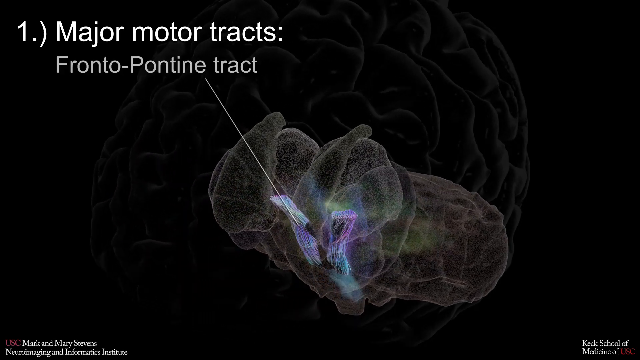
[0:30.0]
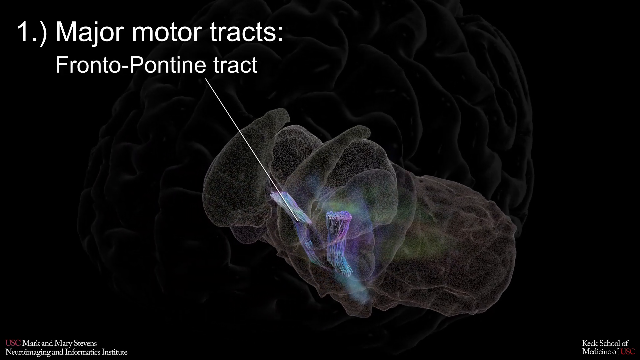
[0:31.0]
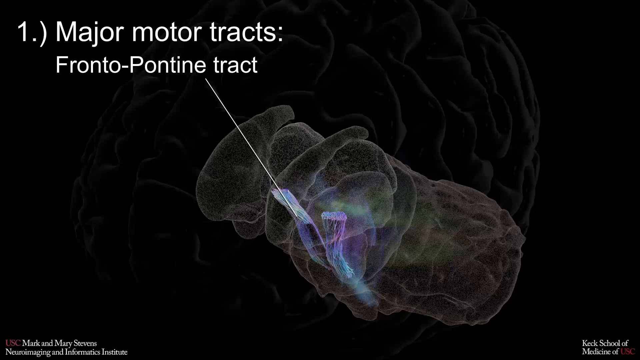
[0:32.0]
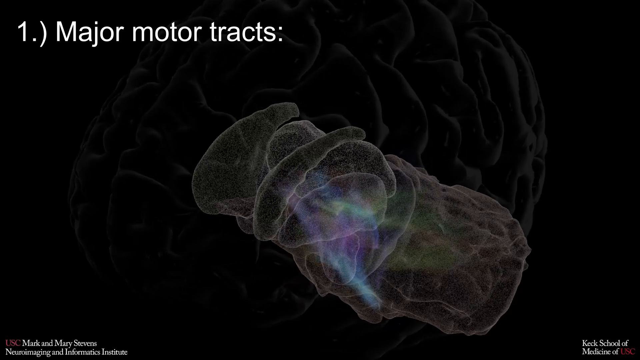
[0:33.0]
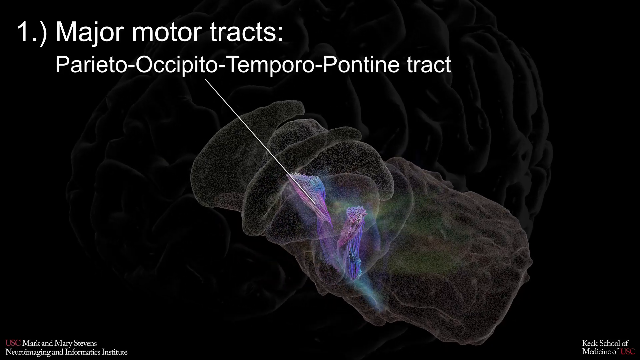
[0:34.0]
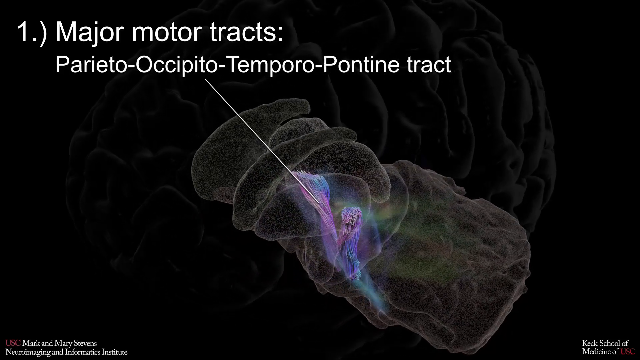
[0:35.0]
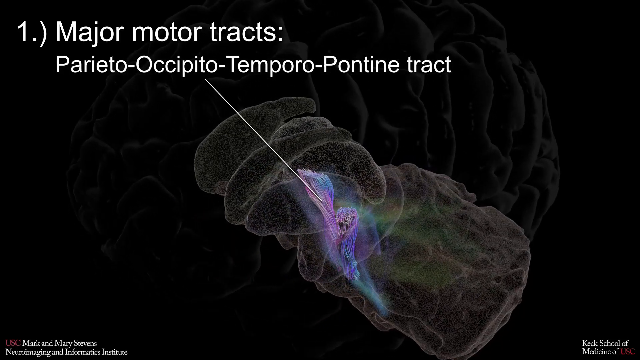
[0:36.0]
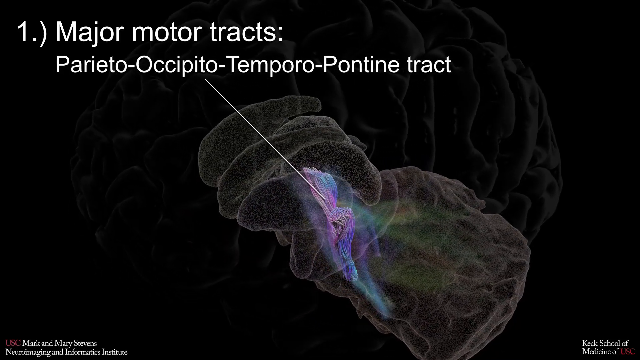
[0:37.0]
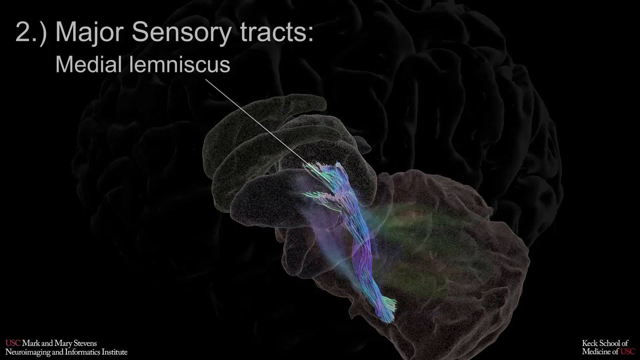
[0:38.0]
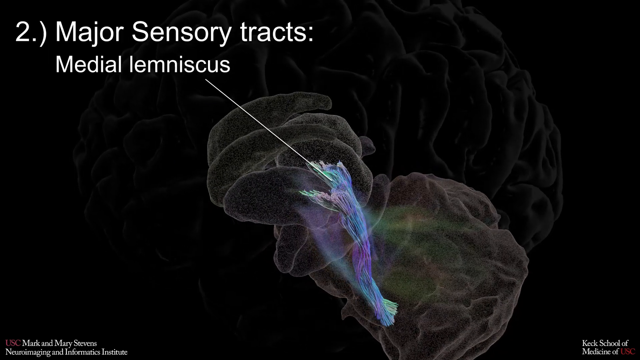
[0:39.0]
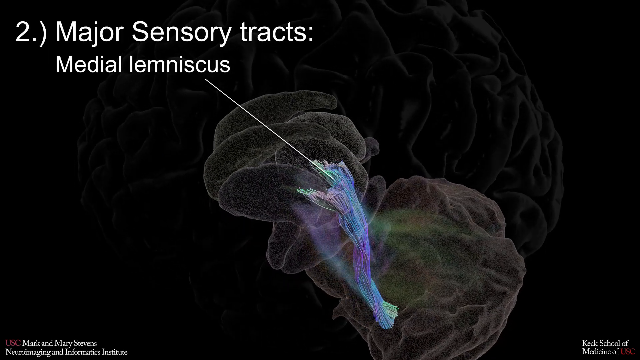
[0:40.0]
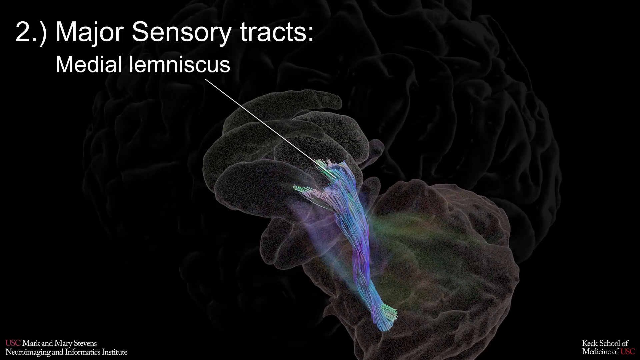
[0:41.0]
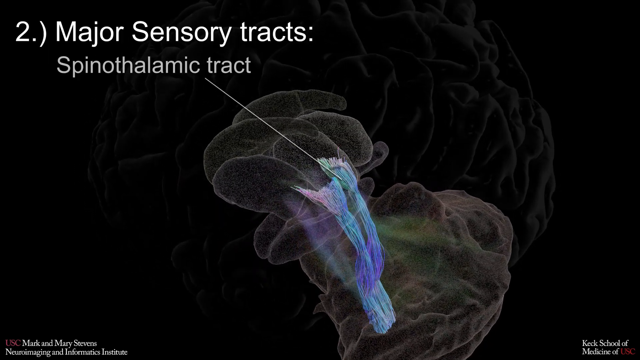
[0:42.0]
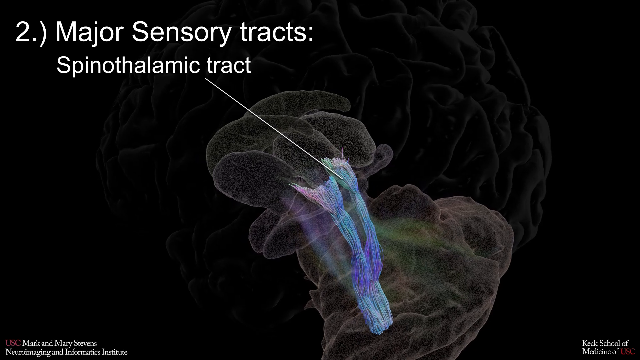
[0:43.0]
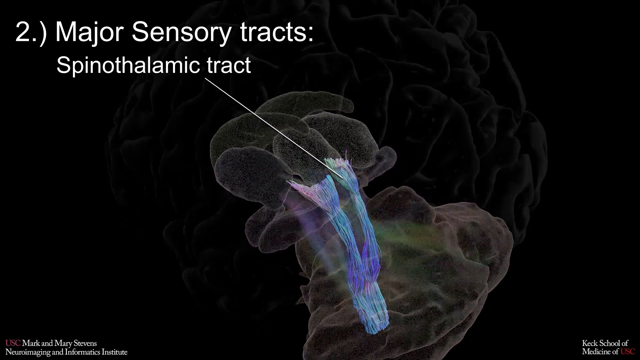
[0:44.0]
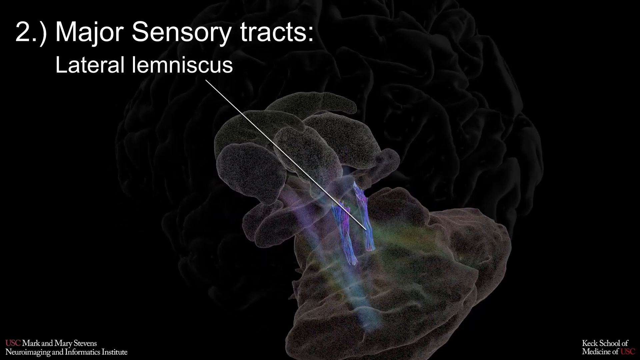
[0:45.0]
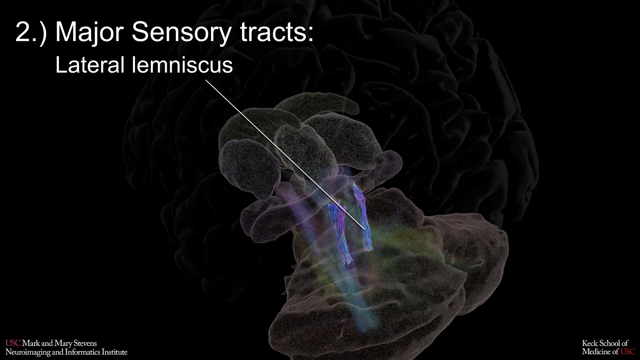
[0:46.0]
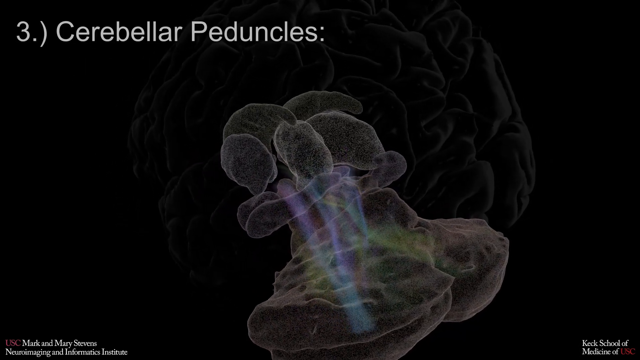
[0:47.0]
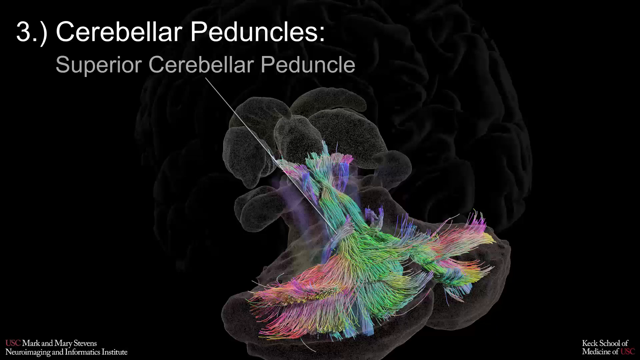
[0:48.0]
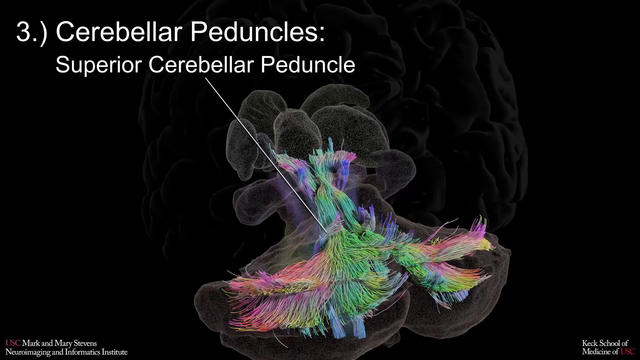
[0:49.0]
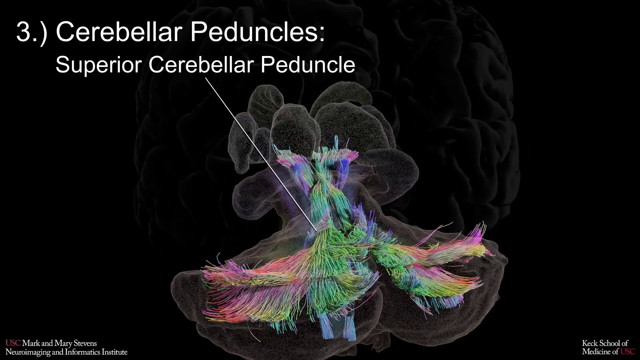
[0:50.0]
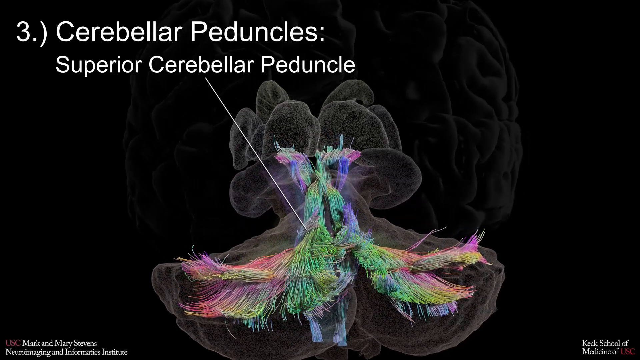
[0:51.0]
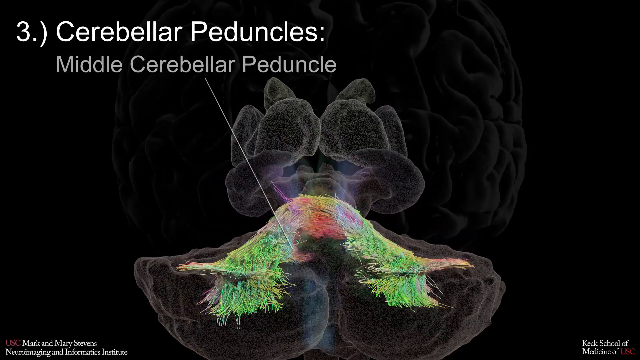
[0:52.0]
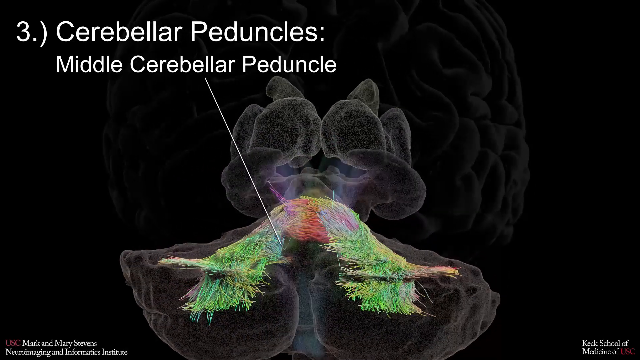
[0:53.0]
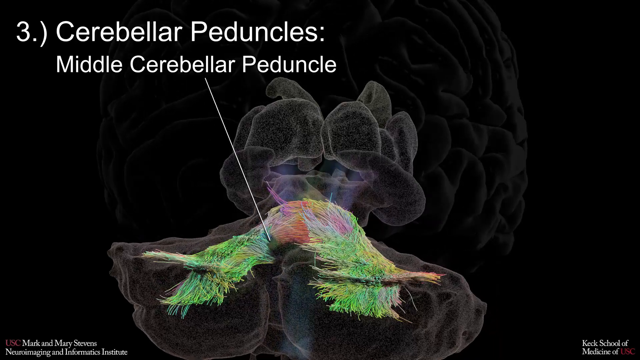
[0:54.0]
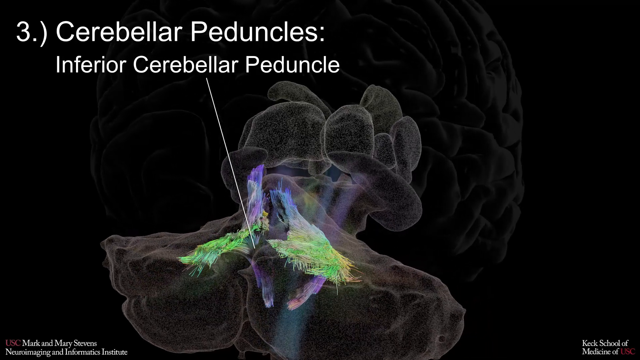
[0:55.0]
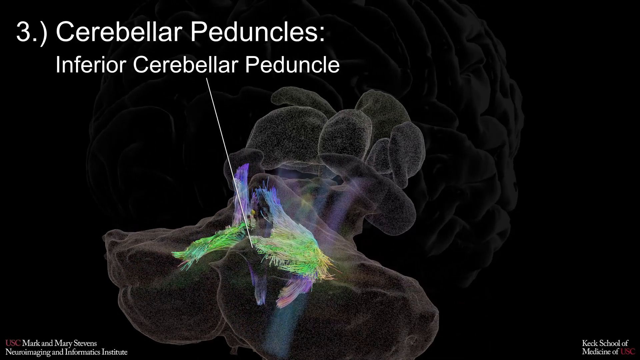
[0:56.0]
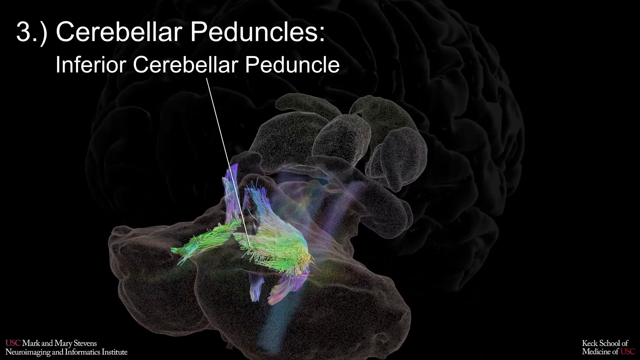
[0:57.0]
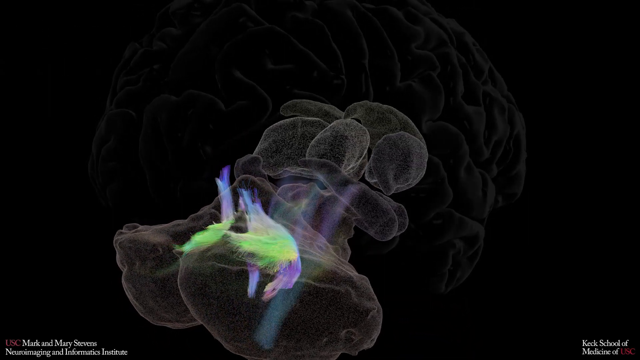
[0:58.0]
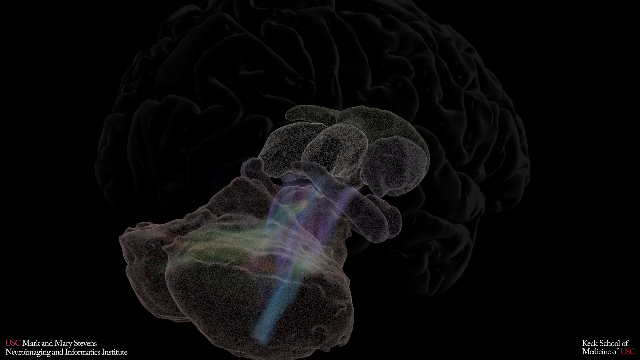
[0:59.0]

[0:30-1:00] A kind of transparent black brain contains a gray component with differently colored stems in it, including blue and purple, with a slight glow around them. White text in the top left corner reads "one major motor tracts" and "frontopontine tract," and there is also text in the bottom left and bottom right corners. The brain spins around, and the stem disappears and reappears. More white text reads "parietal, occipital, temporopontine tract" as the brain keeps moving, and another, longer piece of the stem pops up. Text then reads "two major sensory tracts" and "medial lemniscus" while the camera continues to move, followed by white text reading "spinothalamic tract" and then "lateral lemniscus." The colored parts keep changing as the different text appears. Next the text reads "three cerebellar peduncles," and a mass of kind of rainbow, almost holographic fibers appears in green, orange, pink, blue, purple and other colors. A small line connects the fibers to text reading "superior cerebellar peduncle," then the text changes to the middle cerebellar peduncle as the camera keeps moving, and then to the inferior cerebellar peduncle. The fibers then go off the screen.